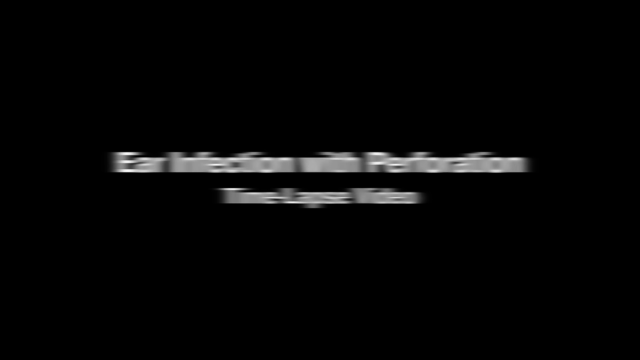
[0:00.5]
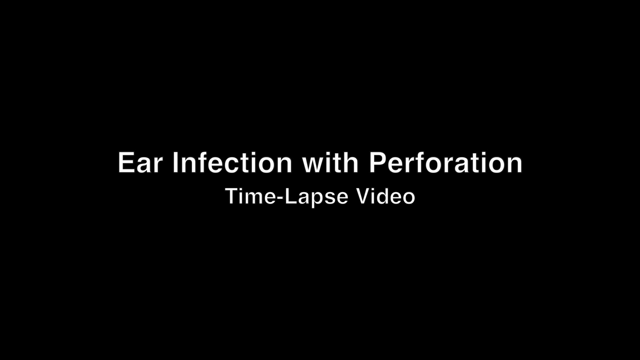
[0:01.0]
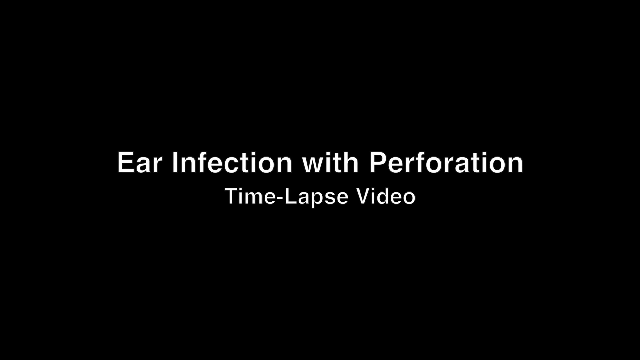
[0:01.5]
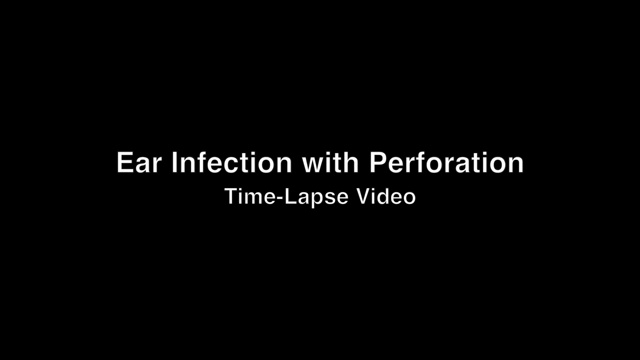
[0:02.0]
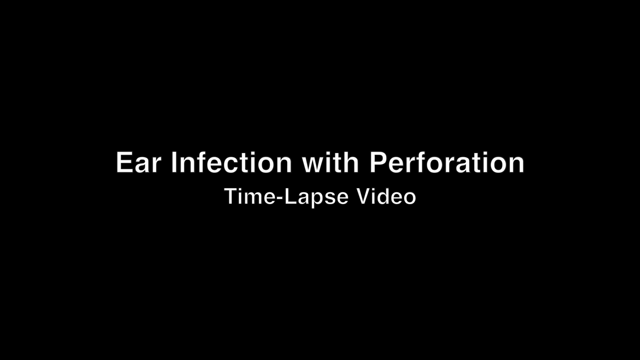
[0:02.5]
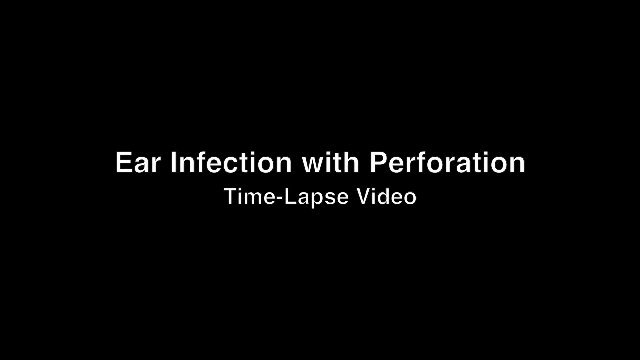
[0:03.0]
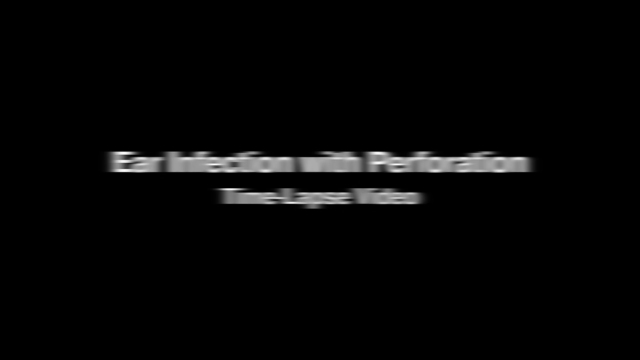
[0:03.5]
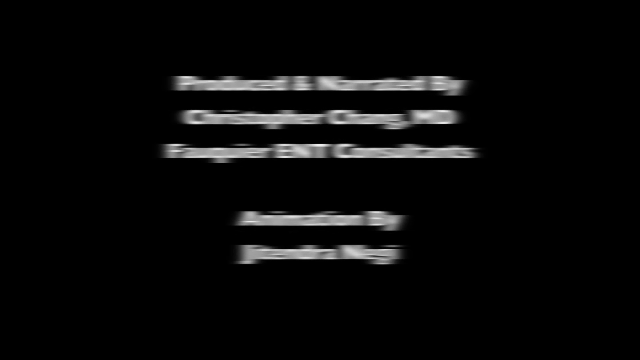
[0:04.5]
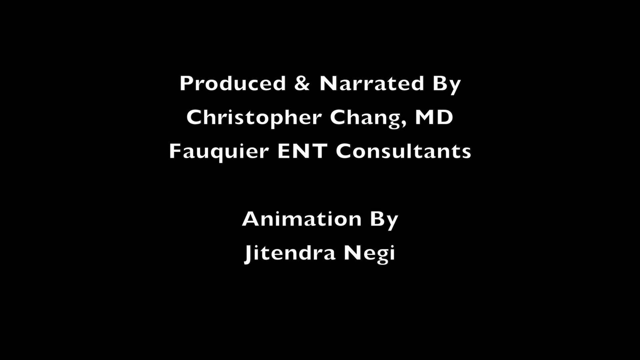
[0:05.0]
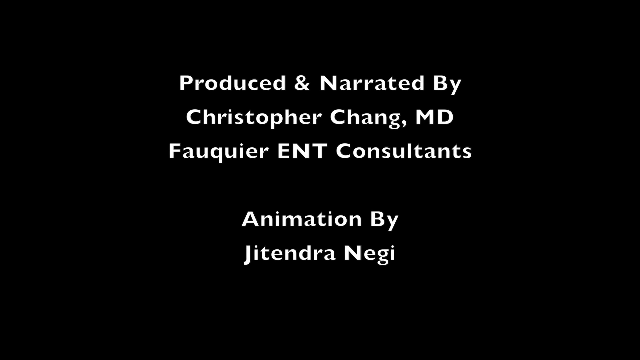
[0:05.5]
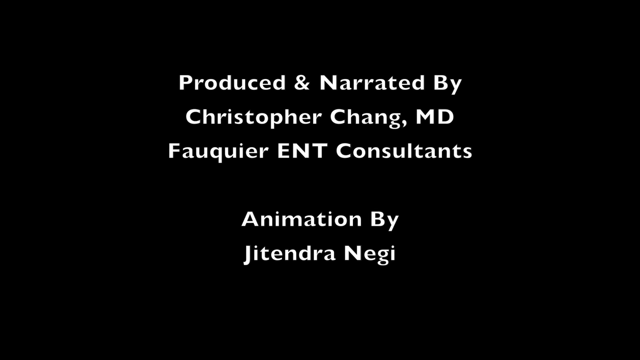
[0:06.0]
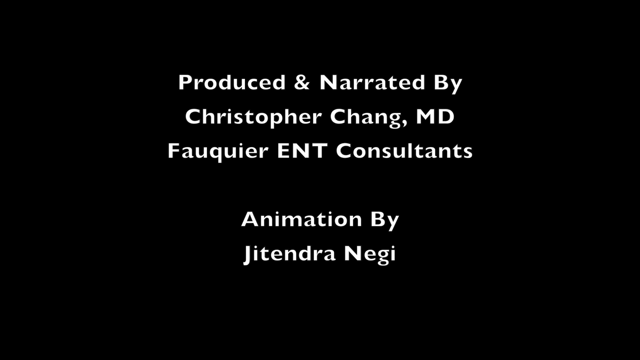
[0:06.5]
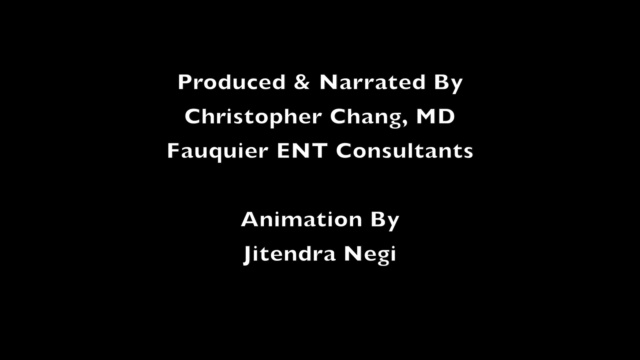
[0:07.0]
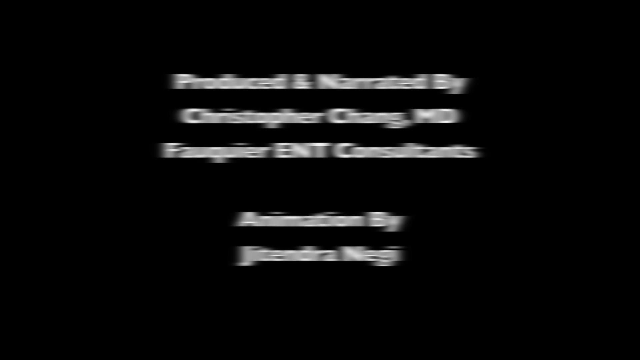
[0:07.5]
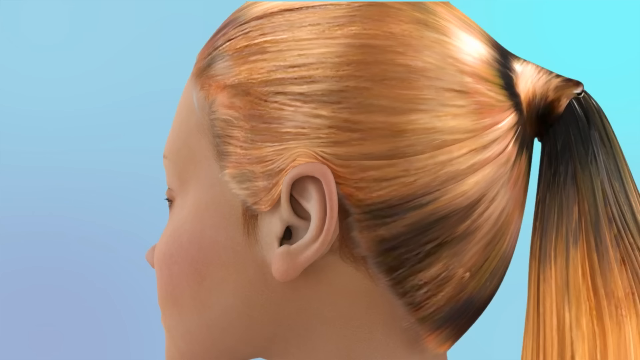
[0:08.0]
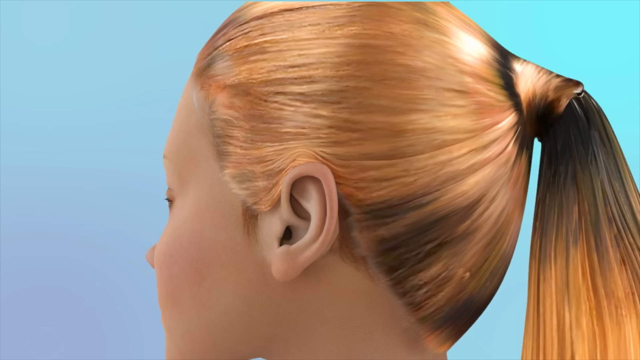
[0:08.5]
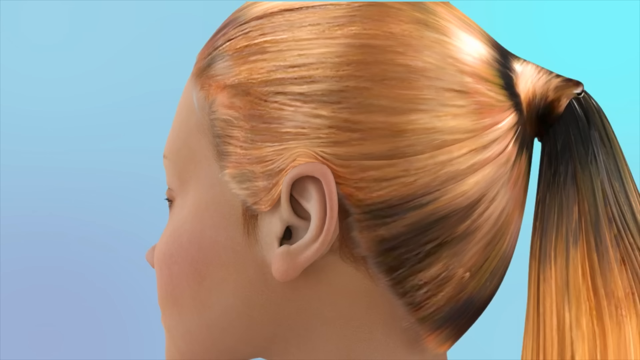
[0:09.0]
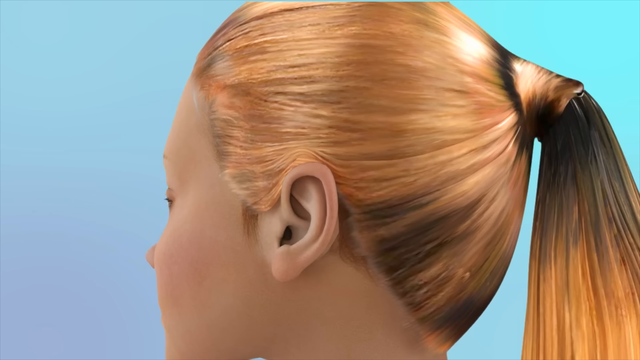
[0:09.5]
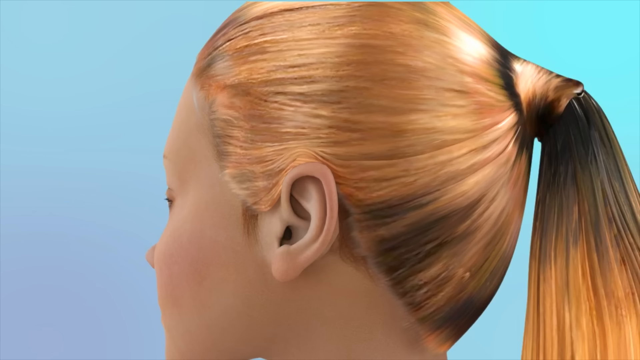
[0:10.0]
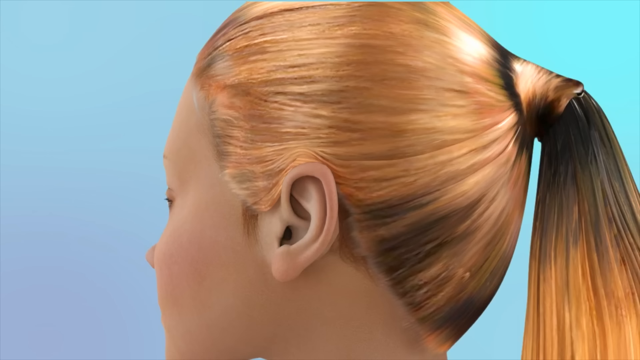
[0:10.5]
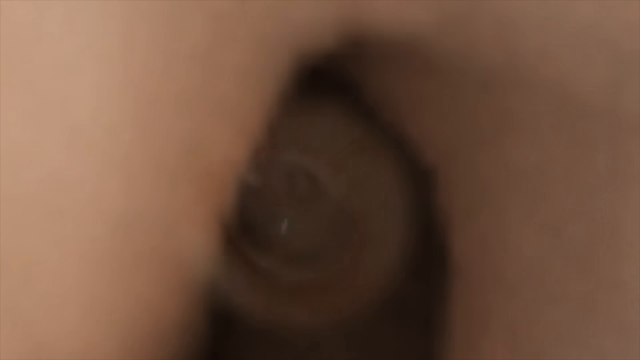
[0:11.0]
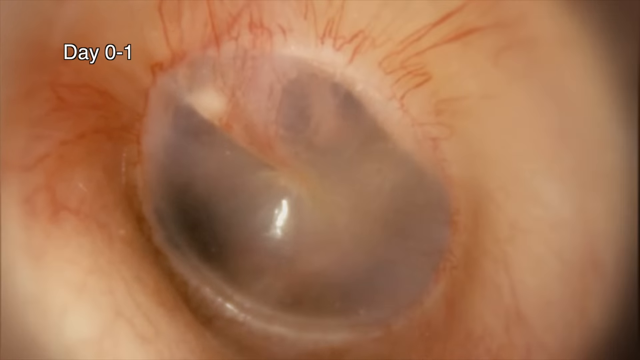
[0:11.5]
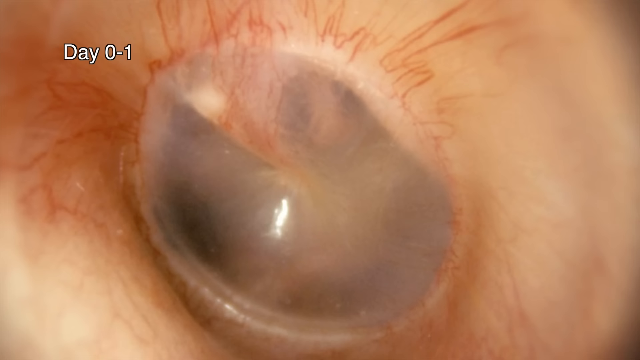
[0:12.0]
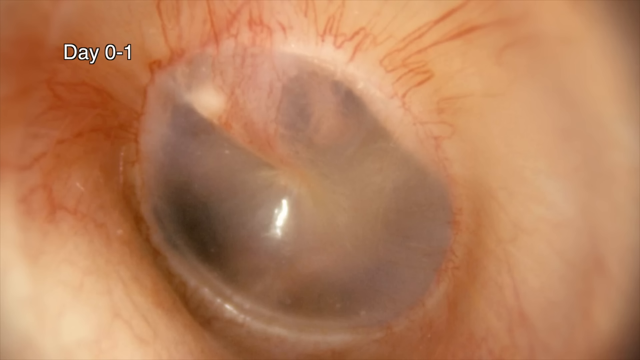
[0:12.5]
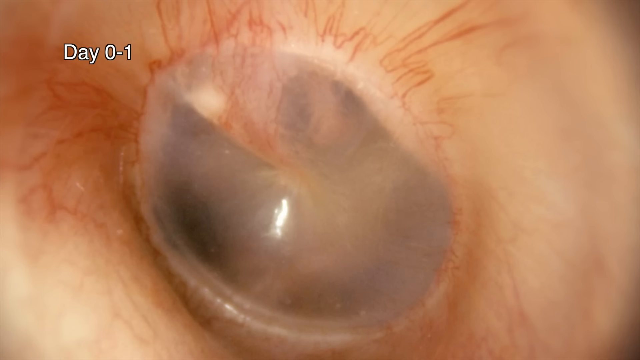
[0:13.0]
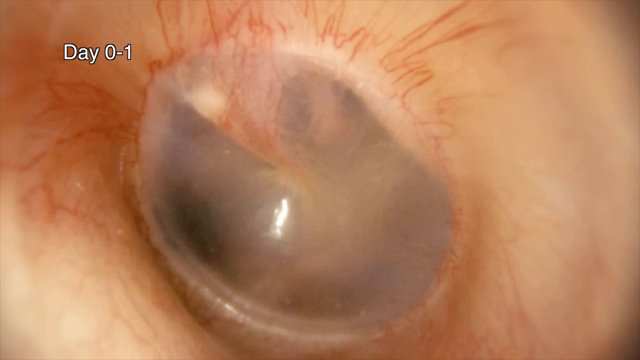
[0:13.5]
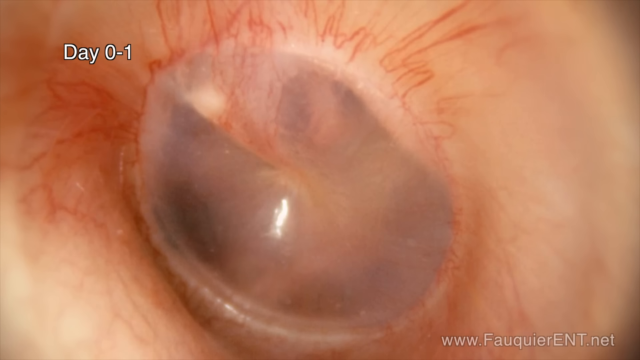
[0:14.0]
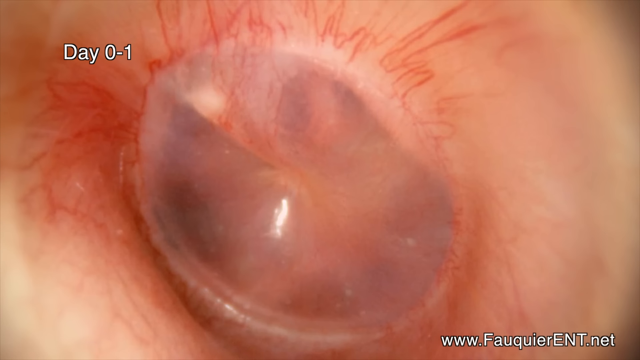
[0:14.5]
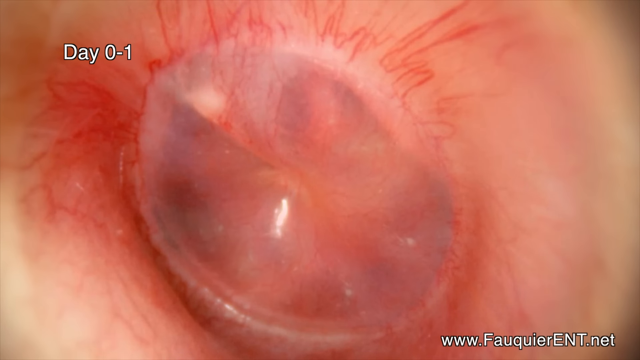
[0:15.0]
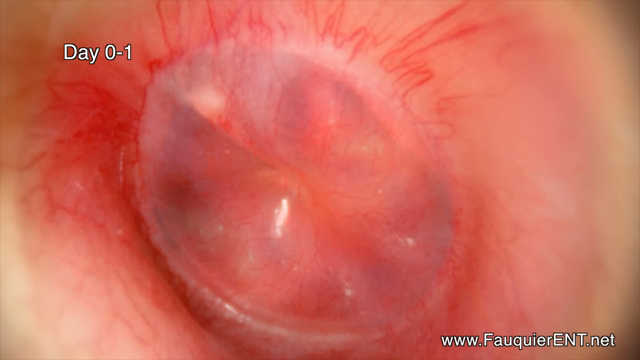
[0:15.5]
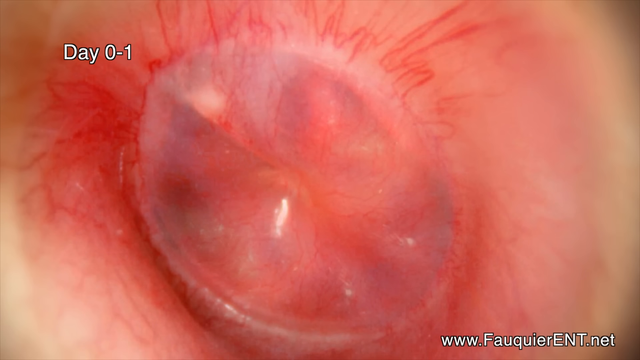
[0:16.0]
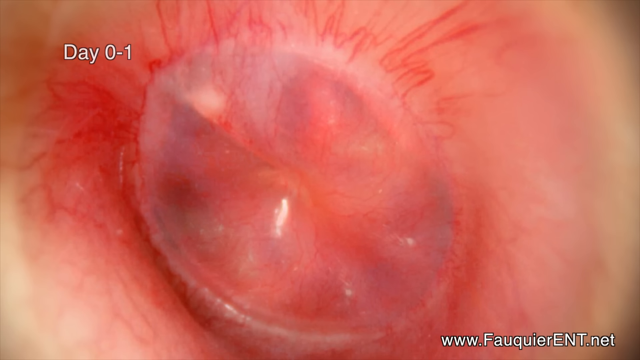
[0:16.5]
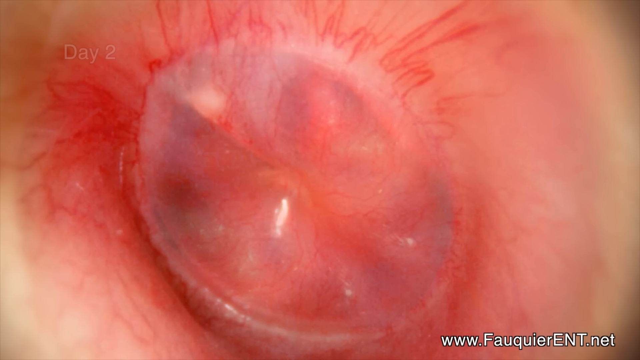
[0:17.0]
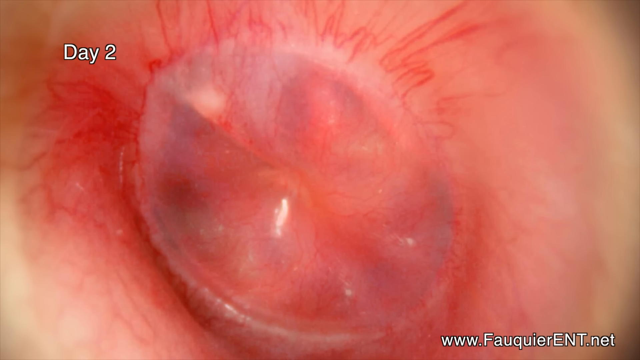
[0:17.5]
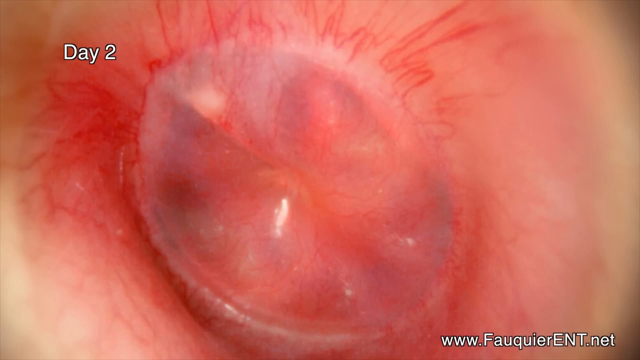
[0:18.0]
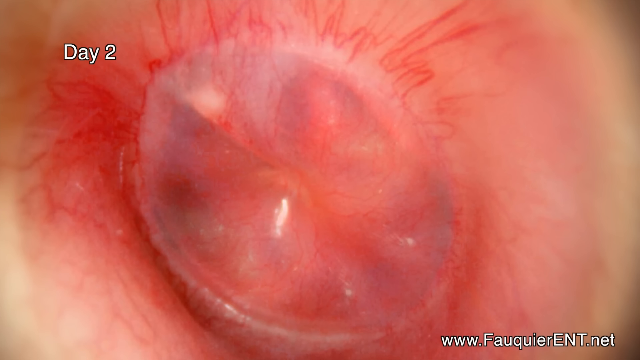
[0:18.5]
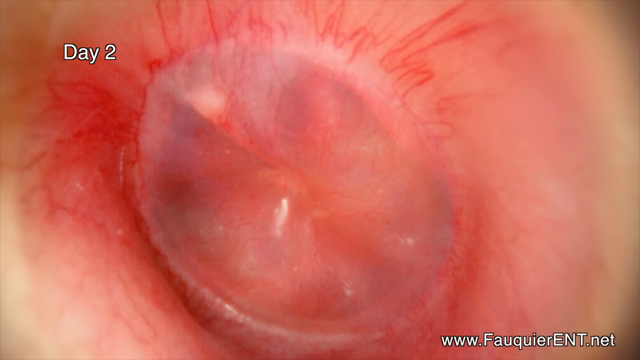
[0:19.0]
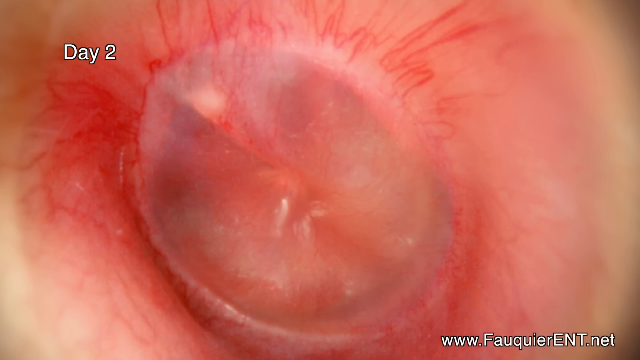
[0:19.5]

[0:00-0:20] The video opens with a title in white writing on a black background that reads "Ear Infection with Perforation, time-lapse video." The next shot shows that it was produced and narrated by Christopher Chang, MD, who is part of ENT Consultants, and that the animation is by Detendra Negi. An animation then shows a girl with orange and black hair, viewed from the back of her head on the left side, and it quickly moves inside her ear. A label at the top left reads "day zero to one." At first the inside of the ear looks normal, a skin-tone color, but it quickly turns red, with the surrounding lines turning red, and the label changes to day two.